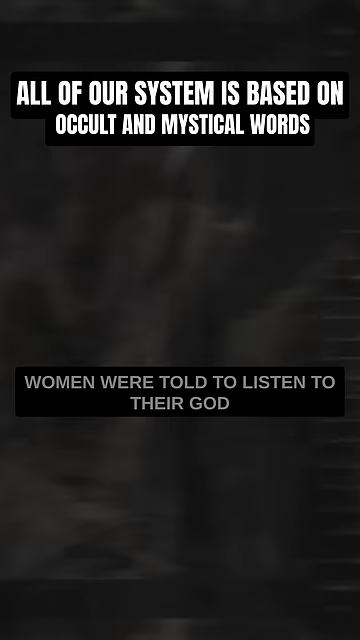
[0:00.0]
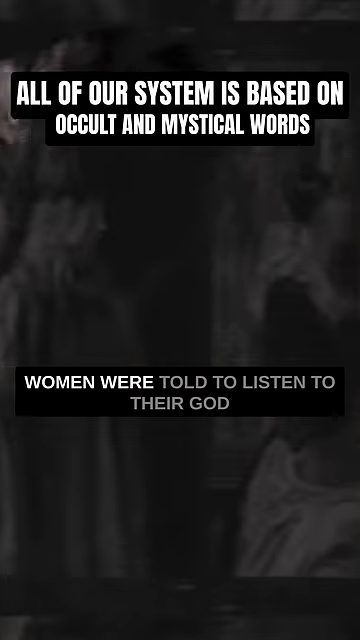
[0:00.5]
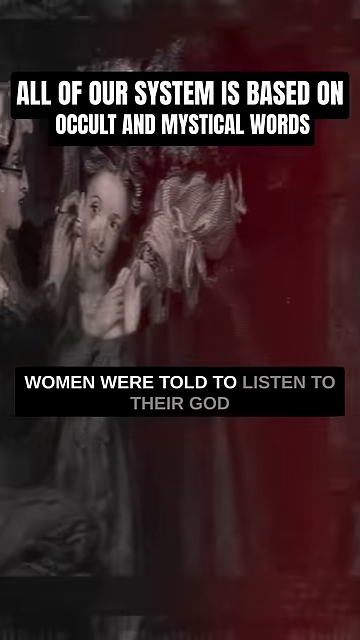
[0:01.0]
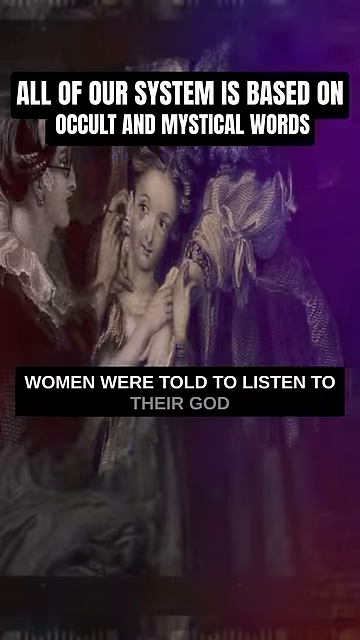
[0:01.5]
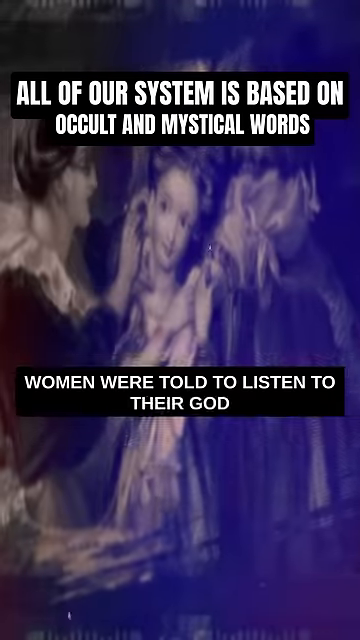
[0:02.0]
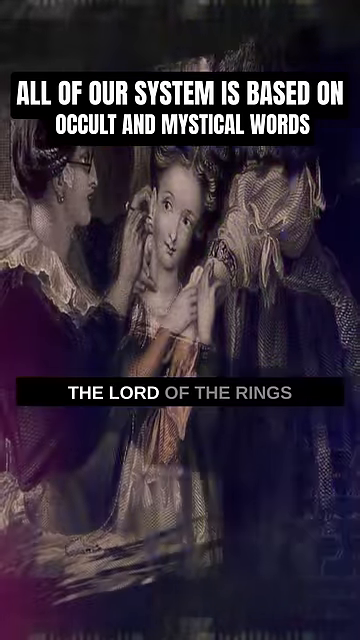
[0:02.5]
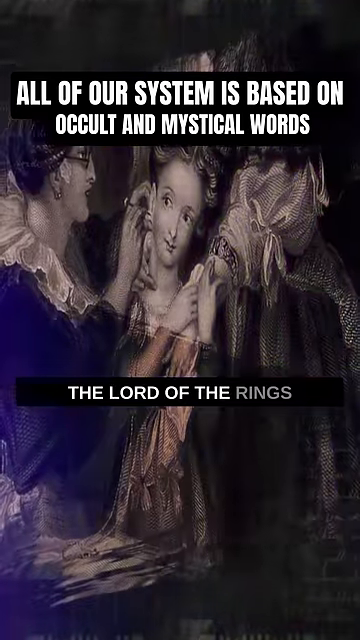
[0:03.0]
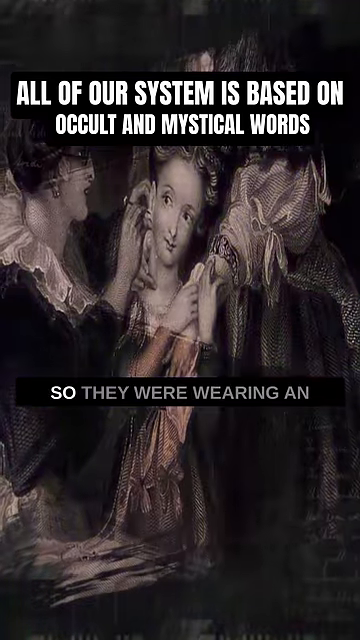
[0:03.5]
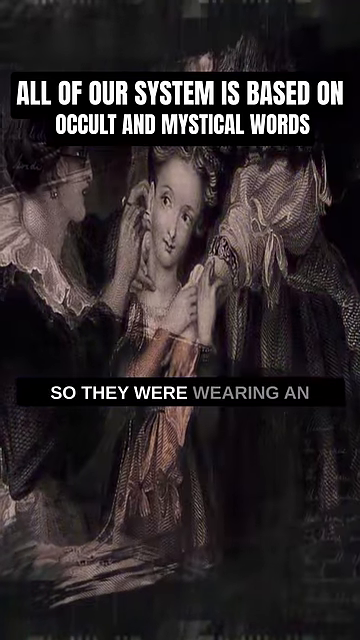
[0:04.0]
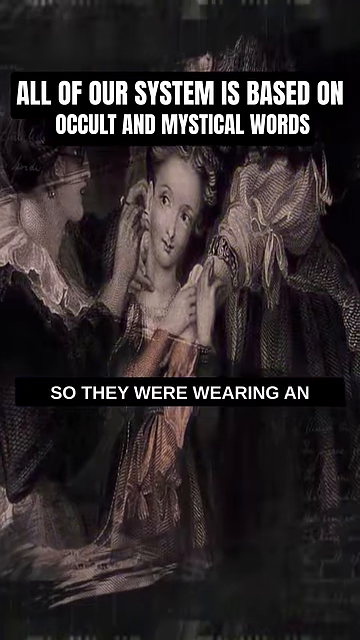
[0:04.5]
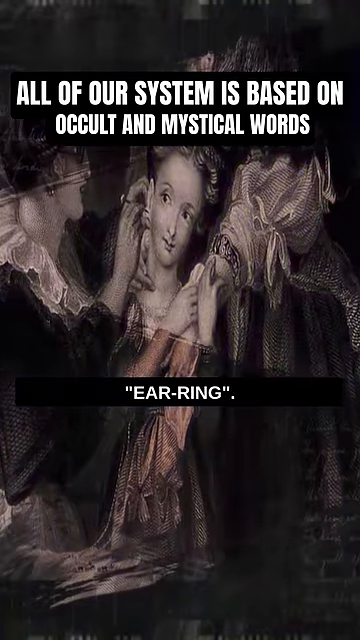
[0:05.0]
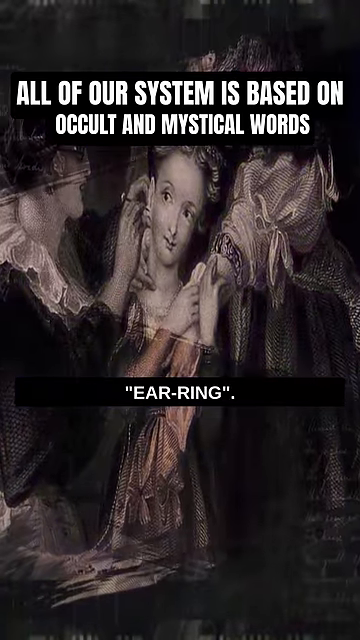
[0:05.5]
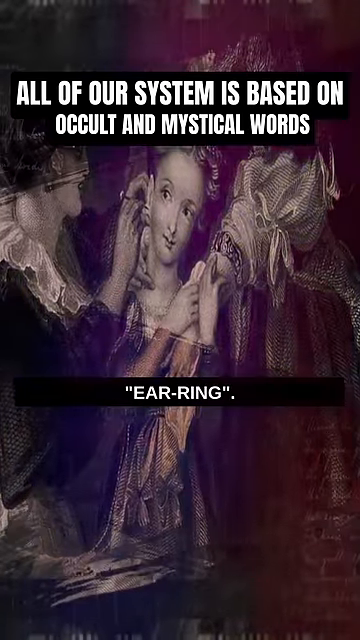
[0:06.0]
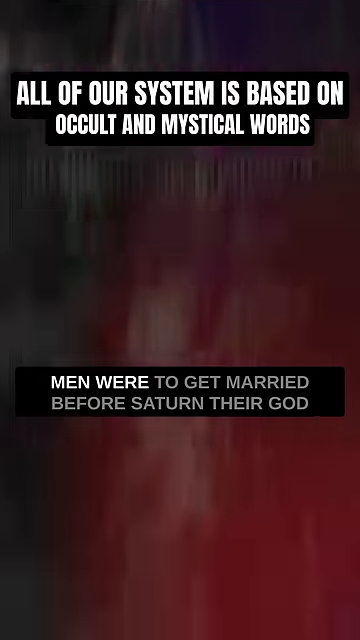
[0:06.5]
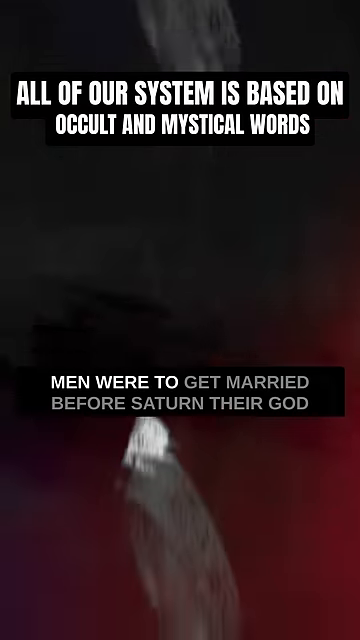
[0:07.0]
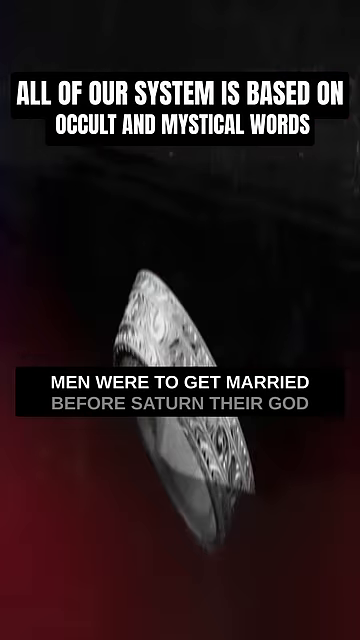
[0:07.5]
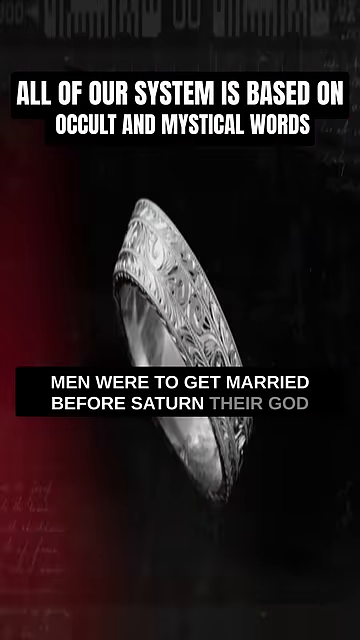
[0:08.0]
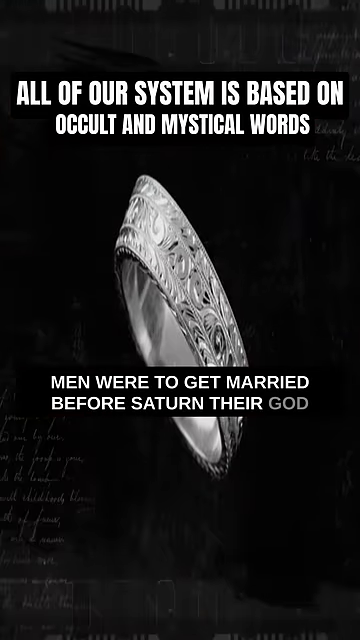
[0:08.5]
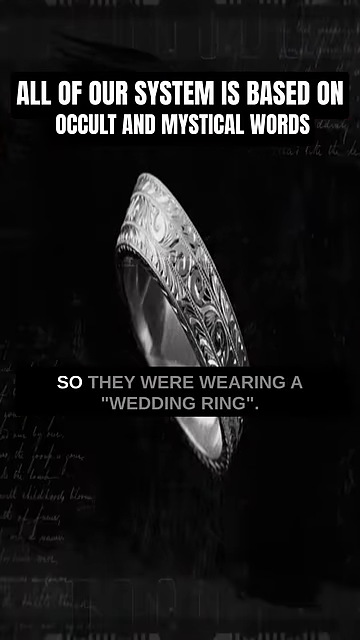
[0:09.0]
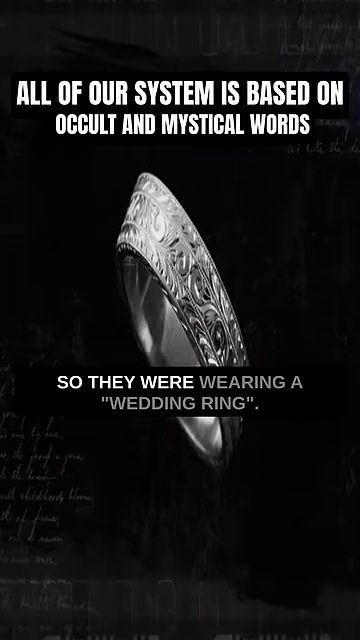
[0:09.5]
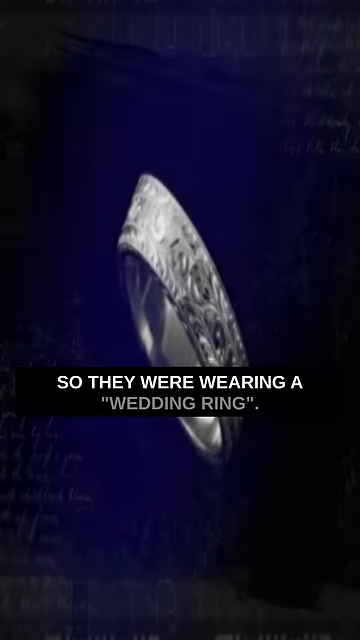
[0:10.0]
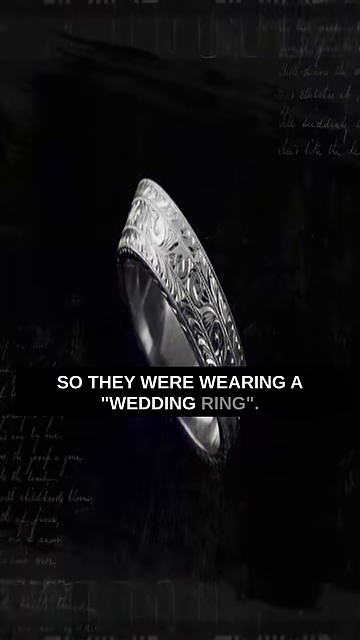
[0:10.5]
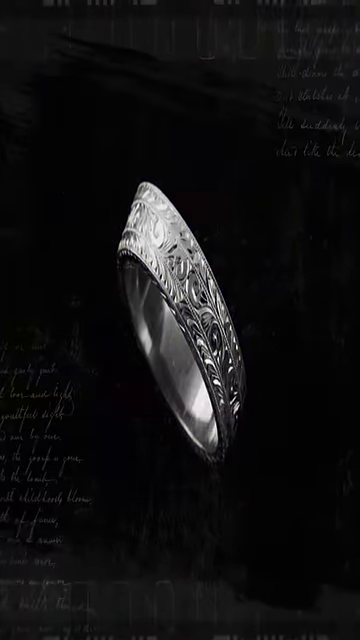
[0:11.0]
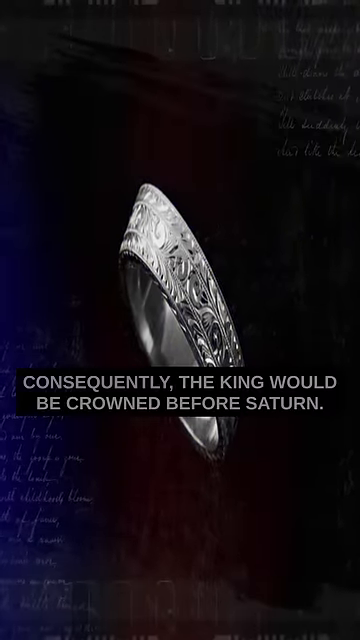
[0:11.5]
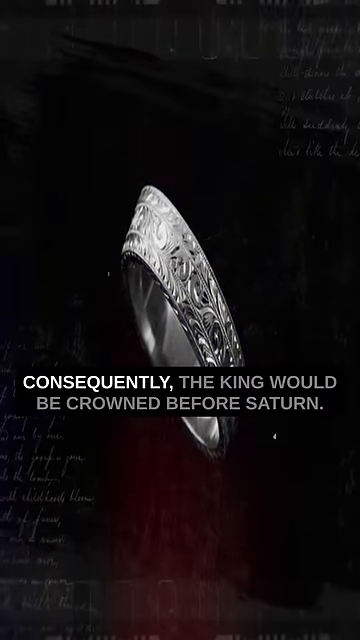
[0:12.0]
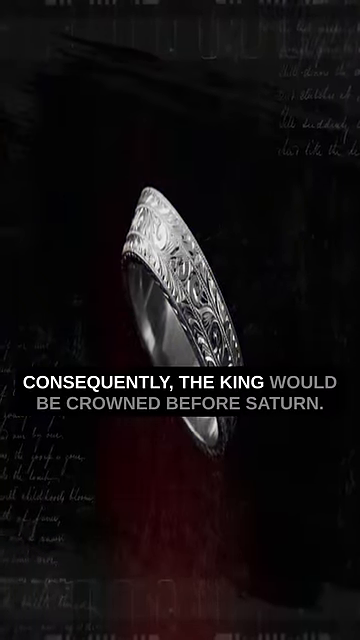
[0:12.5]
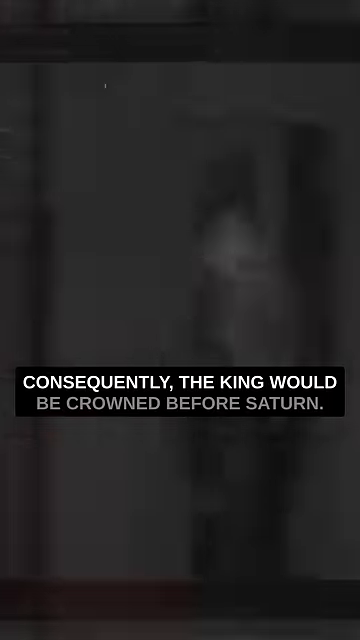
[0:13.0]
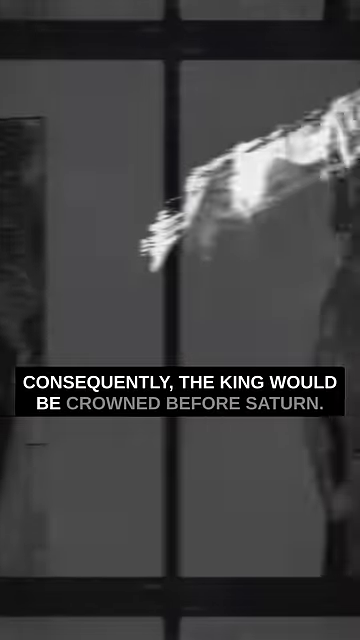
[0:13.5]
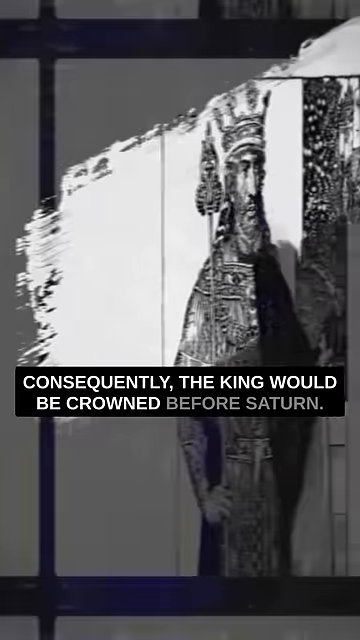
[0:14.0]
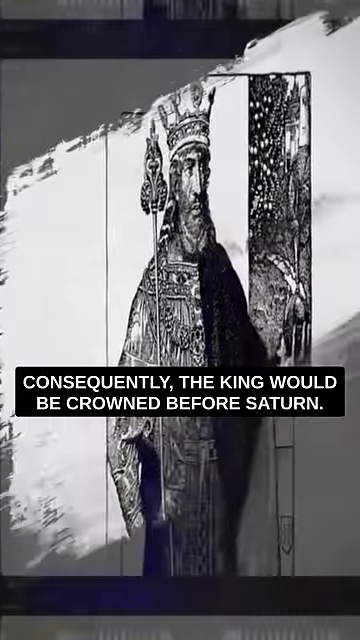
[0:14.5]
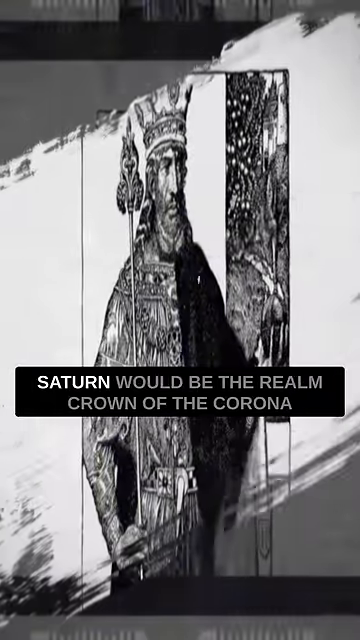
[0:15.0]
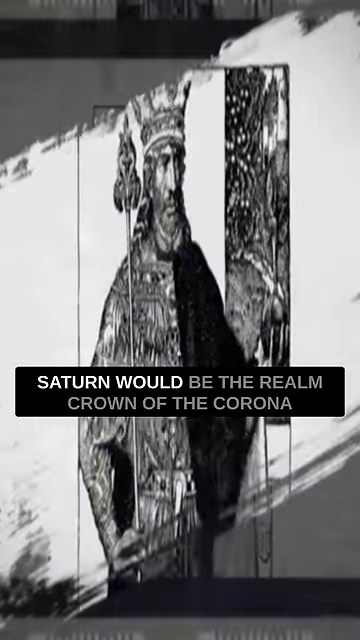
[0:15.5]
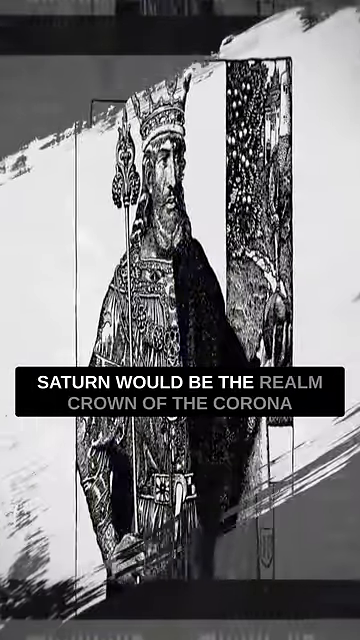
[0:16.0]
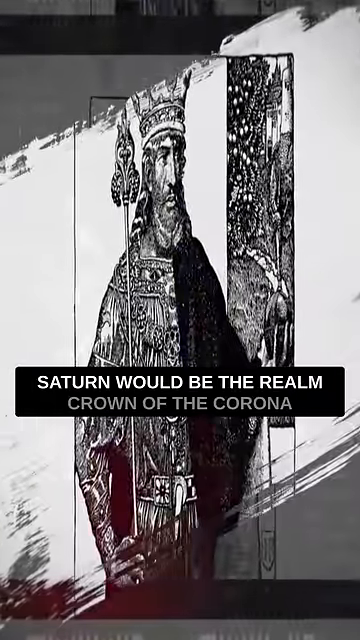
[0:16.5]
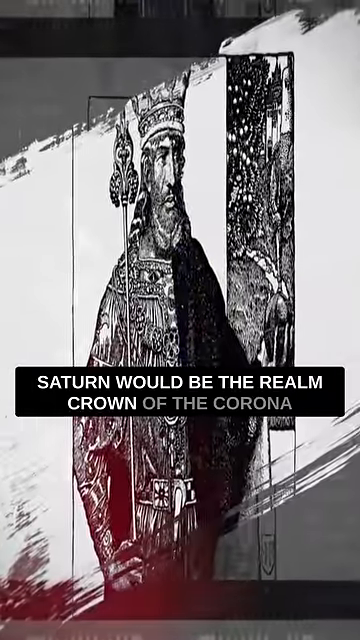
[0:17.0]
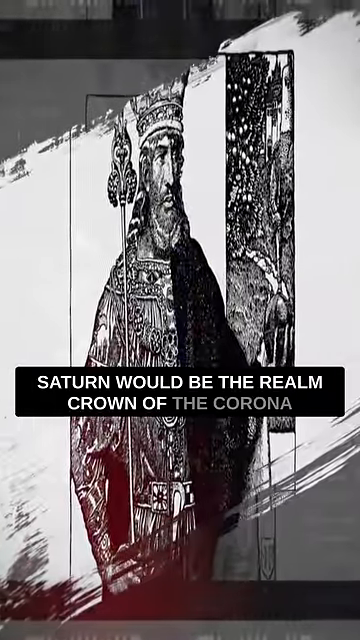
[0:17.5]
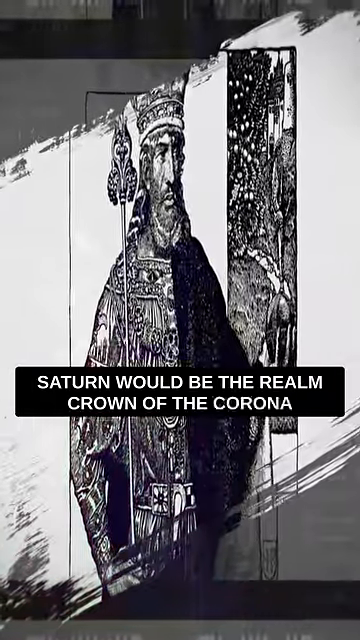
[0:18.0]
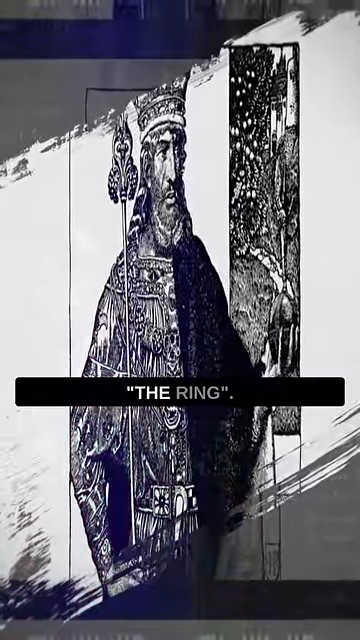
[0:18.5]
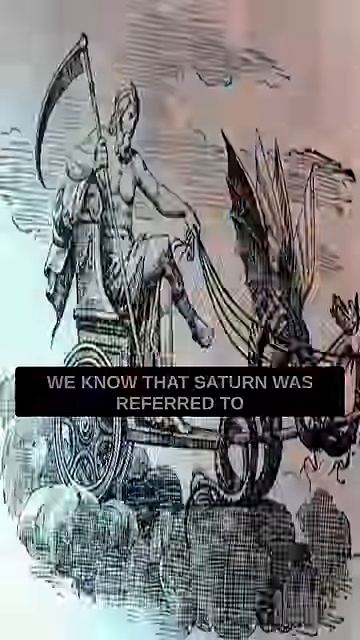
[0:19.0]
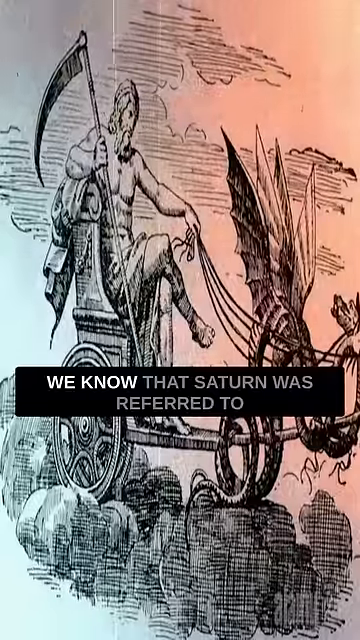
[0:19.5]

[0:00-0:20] The video is taller than it is wide. Text is overlaid on top of it on a black background, all in white capital letters. At the top it reads "all of our system is based on occult and mystical words," and at the bottom it reads "women were told to listen to their god." In the background are what appear to be either drawings or statues: a woman on the left is doing something with a younger woman's right ear while the younger woman smiles toward the viewer, and it looks like she may be helping her with her earrings. The view then moves down toward what might be a piece of jewelry. The bottom text changes to "consequently the king would be crowned before Saturn," and the view moves to an old black-and-white drawing of a king as it pans to the right. It then slowly zooms in on him before changing to a very muscular man sitting without a shirt atop a chariot, a sickle in his right hand. This image is a black-and-white pencil drawing.